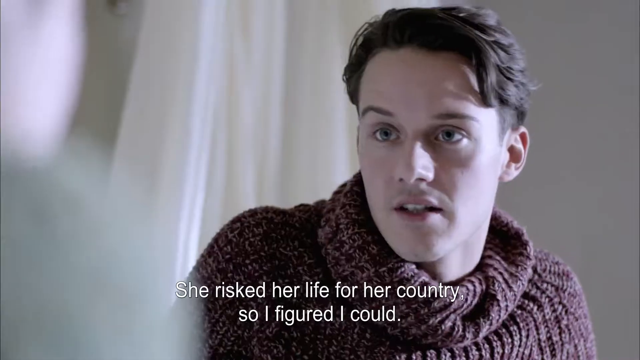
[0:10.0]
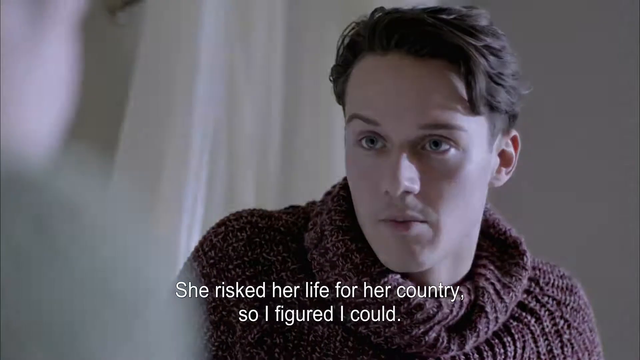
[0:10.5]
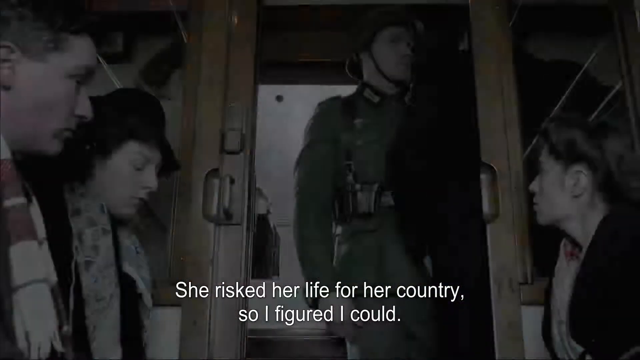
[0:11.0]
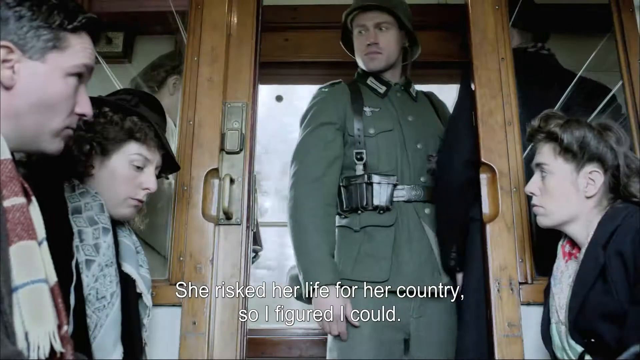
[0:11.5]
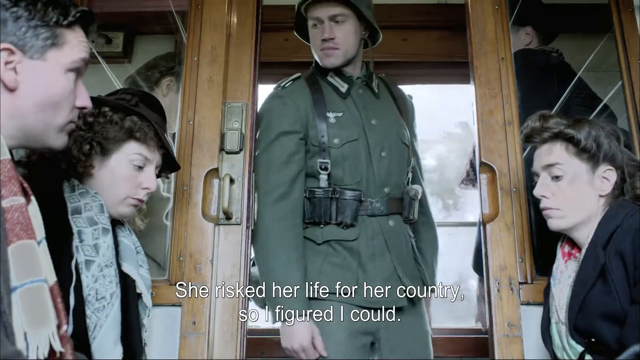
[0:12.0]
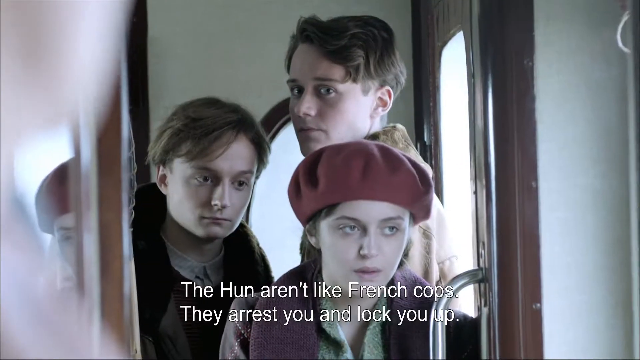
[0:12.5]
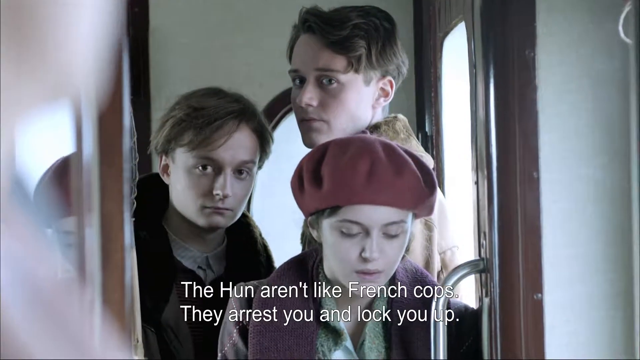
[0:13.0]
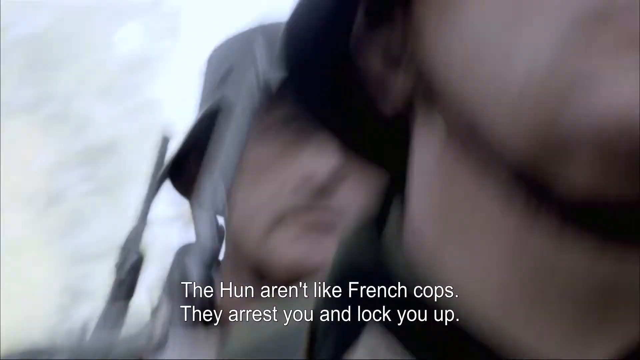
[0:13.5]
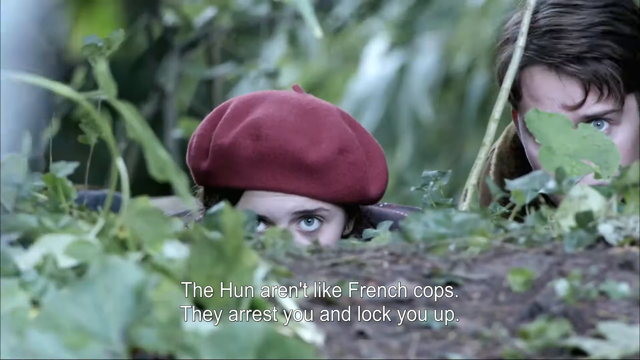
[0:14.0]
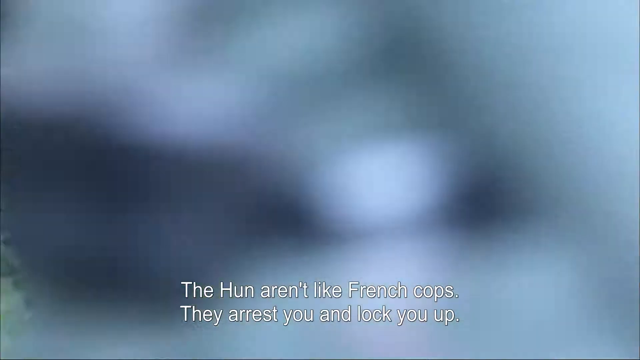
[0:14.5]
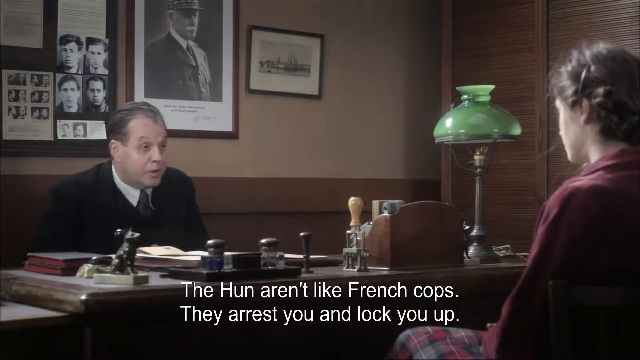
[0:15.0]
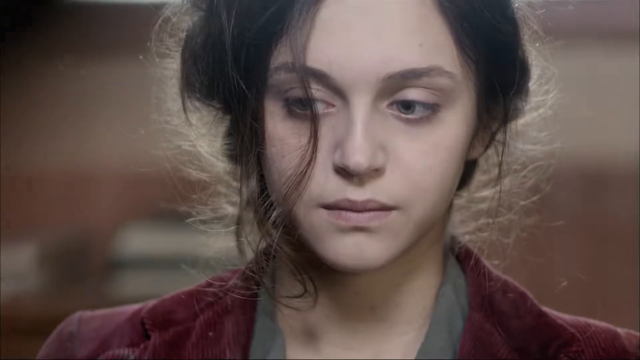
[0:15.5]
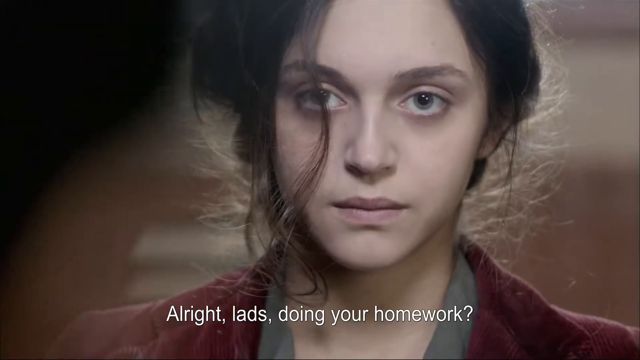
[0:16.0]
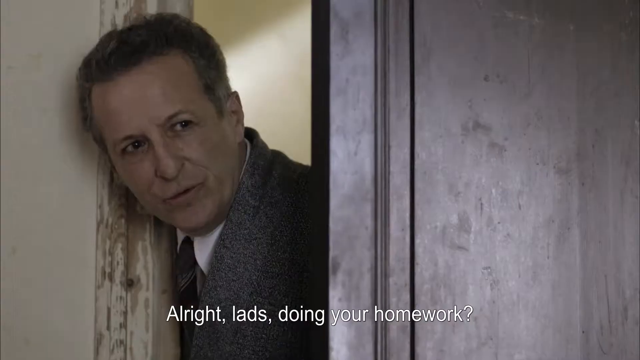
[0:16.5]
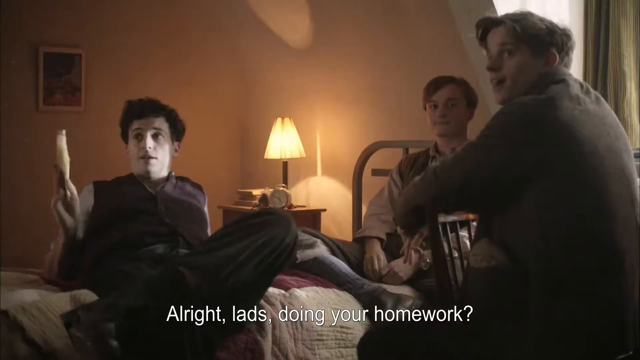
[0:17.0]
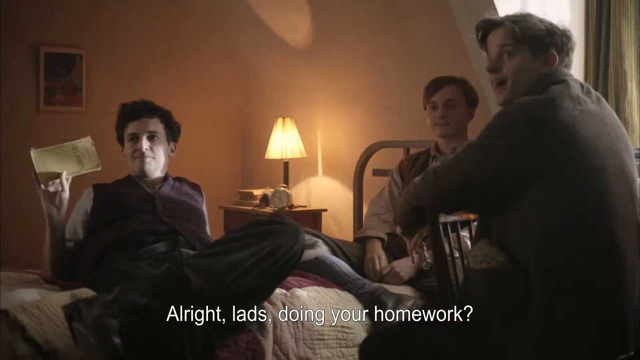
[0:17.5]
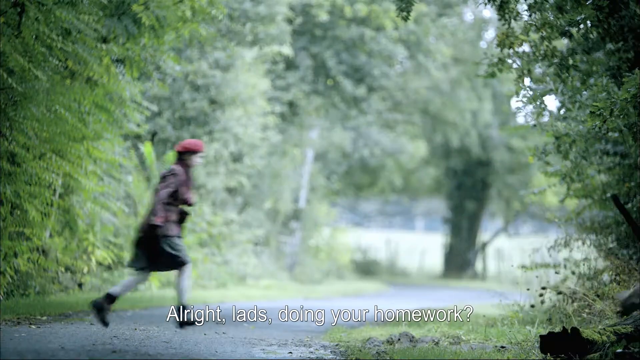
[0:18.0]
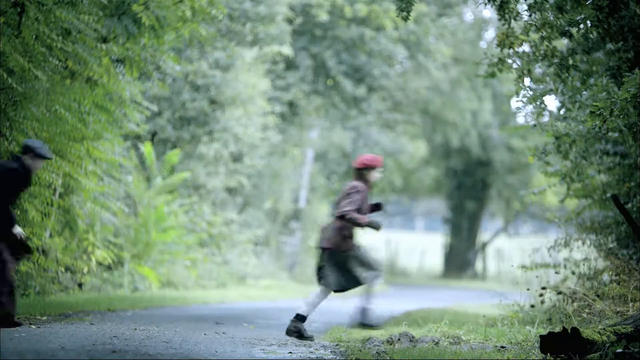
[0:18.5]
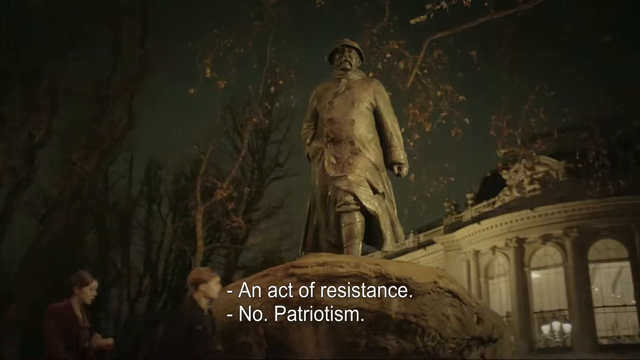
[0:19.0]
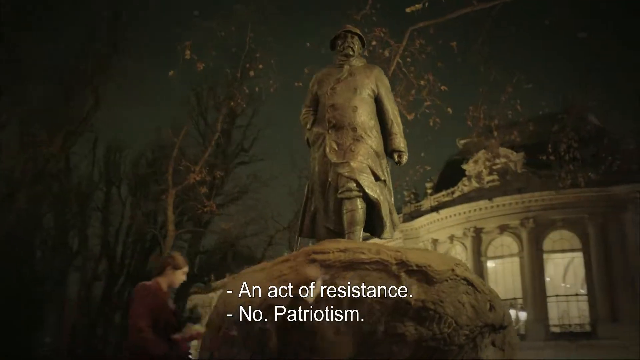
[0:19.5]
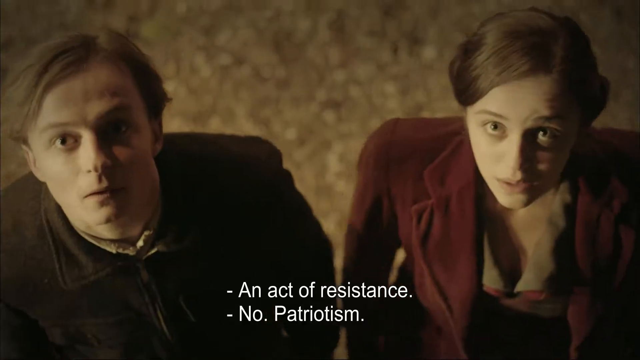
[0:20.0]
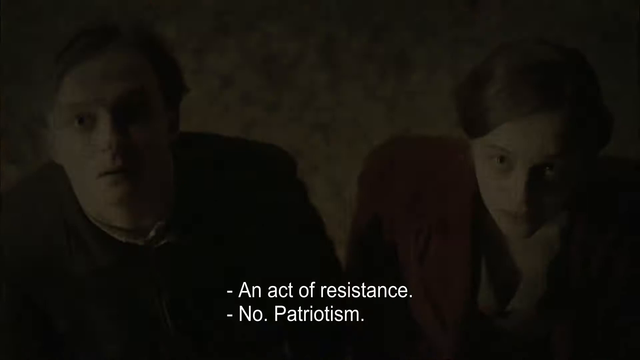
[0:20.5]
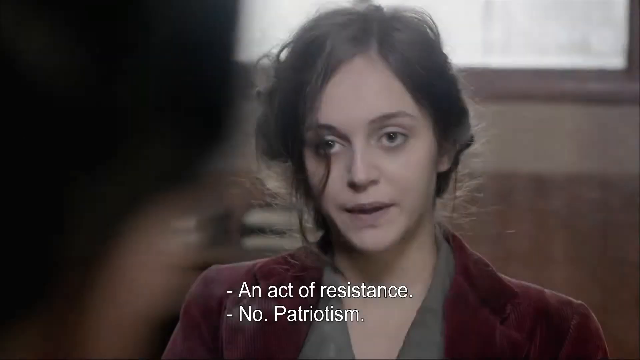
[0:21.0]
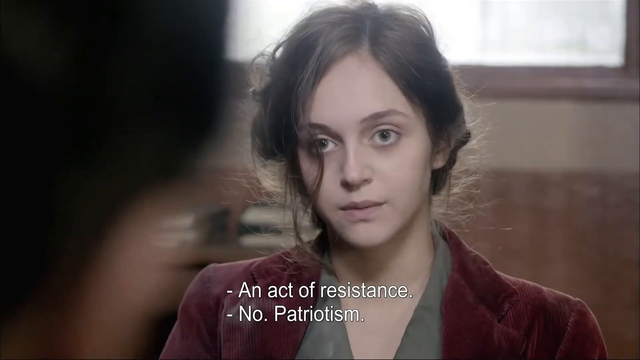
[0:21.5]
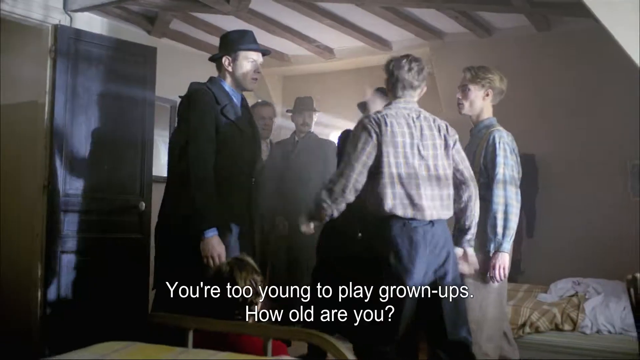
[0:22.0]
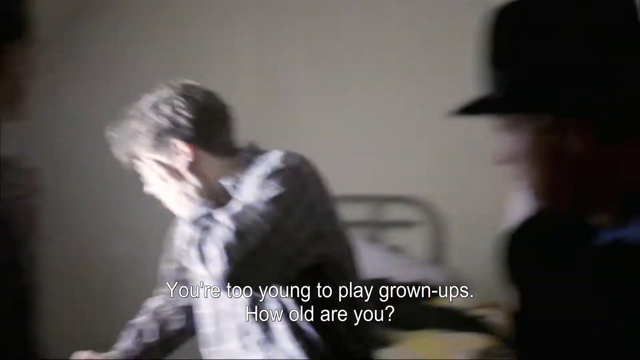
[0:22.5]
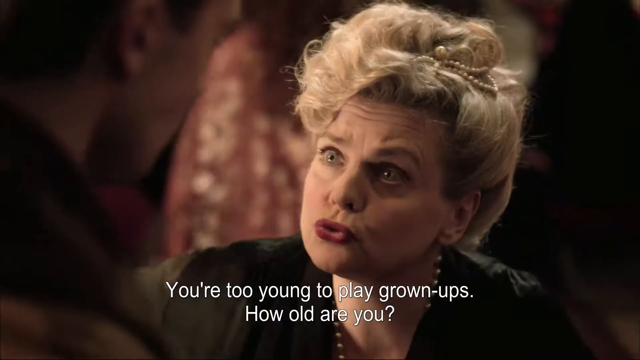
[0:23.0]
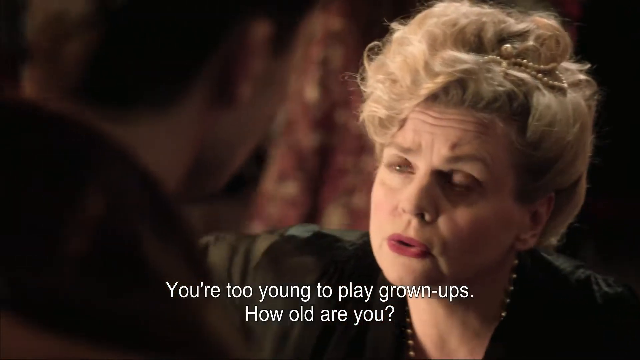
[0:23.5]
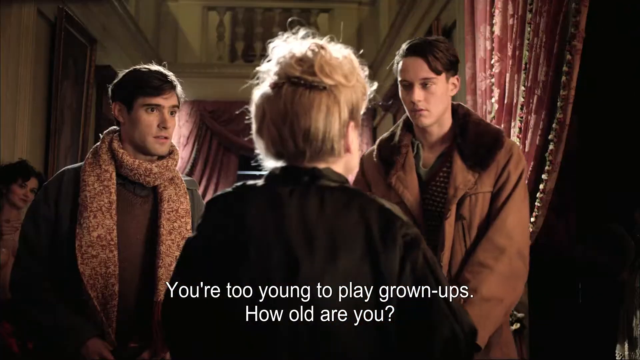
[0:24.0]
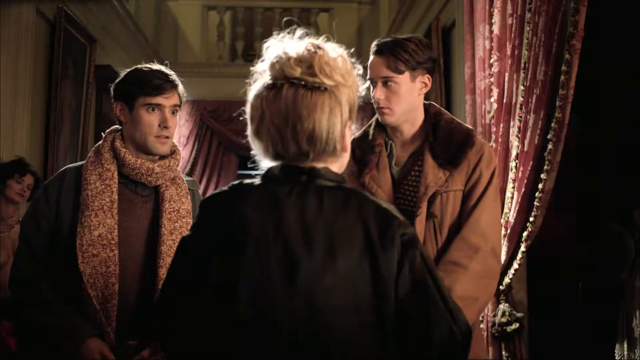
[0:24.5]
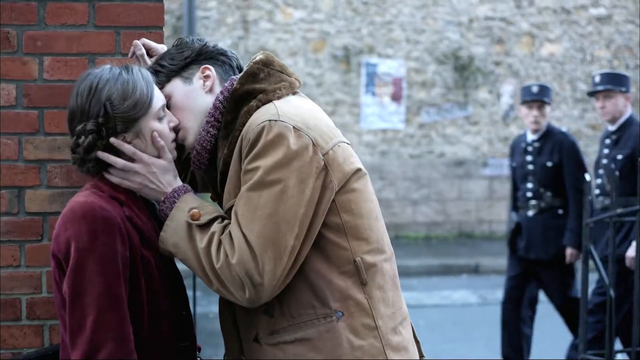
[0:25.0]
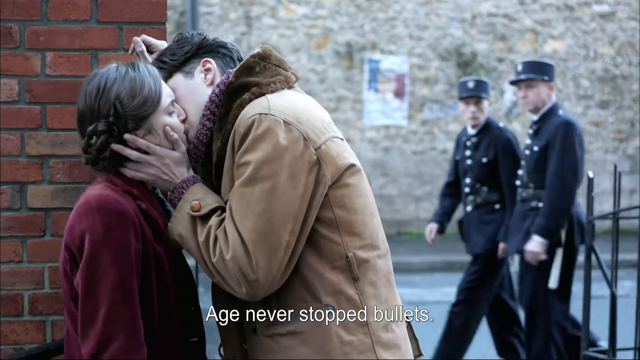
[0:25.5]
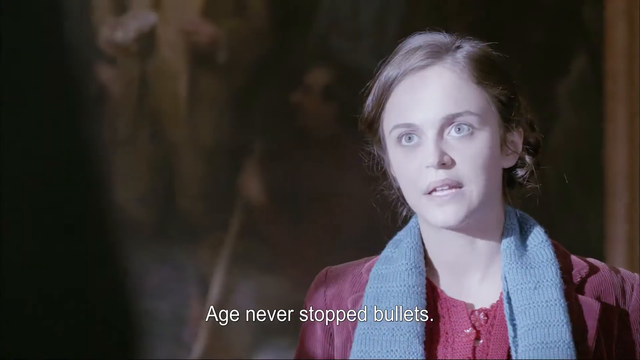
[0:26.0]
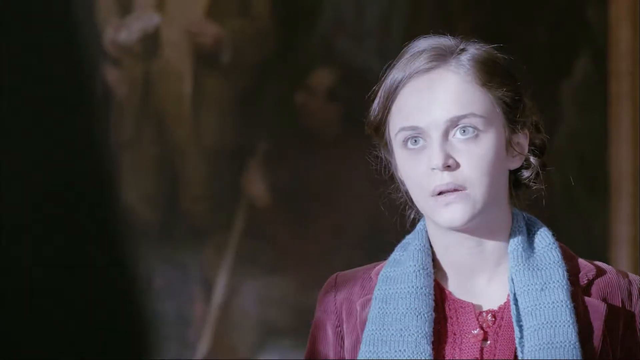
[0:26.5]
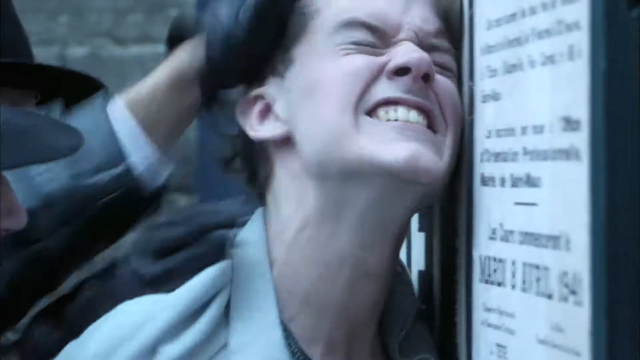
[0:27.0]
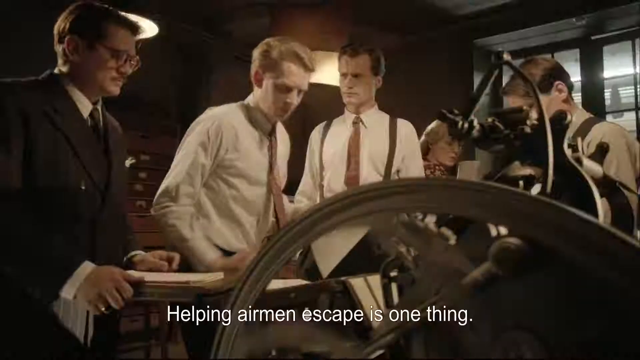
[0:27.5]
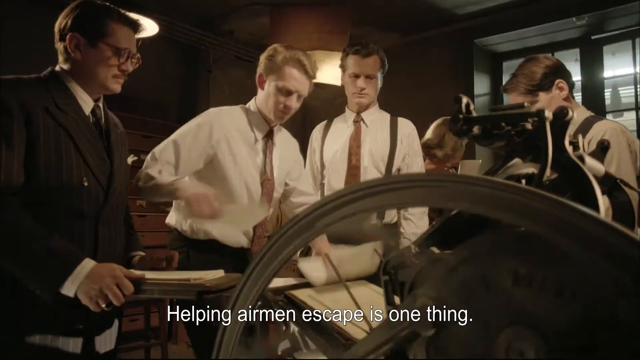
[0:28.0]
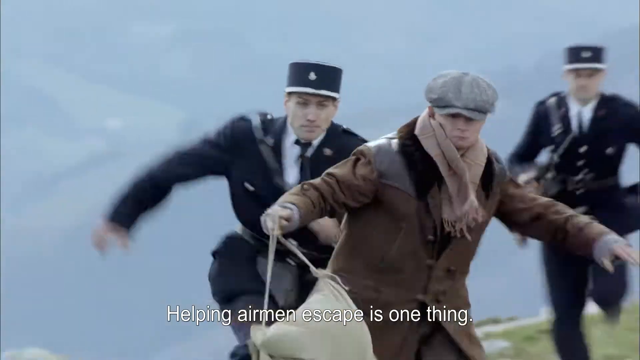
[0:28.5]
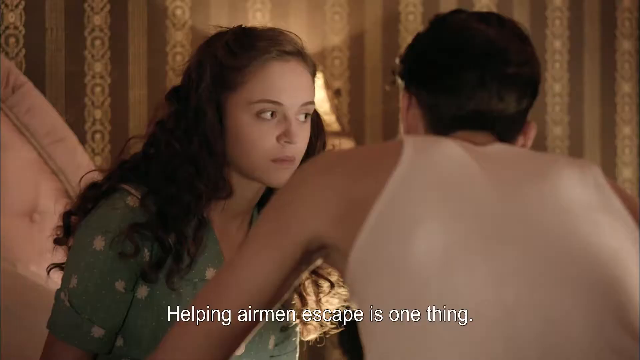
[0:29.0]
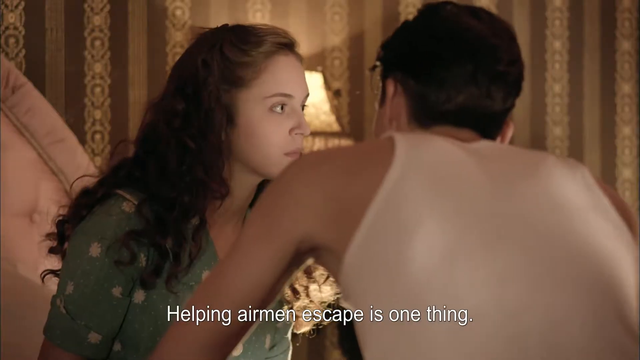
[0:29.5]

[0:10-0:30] A very busy sequence with a lot of action opens on the young man from before in a red sweater. It immediately shifts to a train, where a man and a woman sit to the left with a young woman across from them on the right. In the middle, with the door open, a soldier walks by and peers inside. He wears a green khaki uniform with a green helmet and has utensils in a strap over his right shoulder. Next, three of the young people, including the young man and woman from before, stand in a room looking out; the two men are behind the young woman, who now wears a red beret. The scene shifts to a group of soldiers wearing helmets, with guns on their backs, walking down a road, while the young man and young woman hide behind a small bank as the soldiers walk by, spying on them. Next, the young woman sits behind a desk. In front of the desk is a very official-looking gentleman in a suit and tie. On the desk appear to be many documents and a bunch of random knickknacks. The man speaks to the young woman, and she looks at him as he asks, "All right lads, doing your homework?". The next scene shows three young boys, including the one from the beginning; two sit on a bed, and one sits backwards on a chair with his arms around the back of the chair. Three young people then cross a dirt road single file, with many green trees growing on both sides, running across as if in a hurry. The young man and young woman appear next, looking upwards. In a room, a group of men in suits and hats are with one of the young people, who is struck on the left cheek by one of the men in hats with his right arm. As the young man falls to the floor, another scene shows an older woman with blonde hair, meticulously dressed with her hair in place, talking to two of the young men, one in a scarf and a brown shirt and the other in a brown coat with a furry collar. The young man and young woman kiss next to a brick wall while, in the background, some soldiers walk by looking at them. The young woman appears alone, saying "age never stopped bullets". The young man's face is then pushed against a wall by an older man in a hat, with a glove on the left hand pushing his head. Next, some device with a spinning wheel is being used; to the left is a gentleman in a suit and glasses, and from the middle to the right of the screen are three young men, all in white shirts and ties, two with suspenders. Finally, a young man in a coat, hat and scarf around his neck, carrying a bag, runs while being chased from behind by two soldiers wearing hats and official or military uniforms.